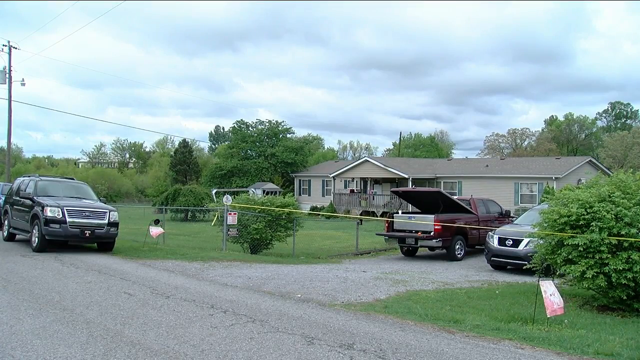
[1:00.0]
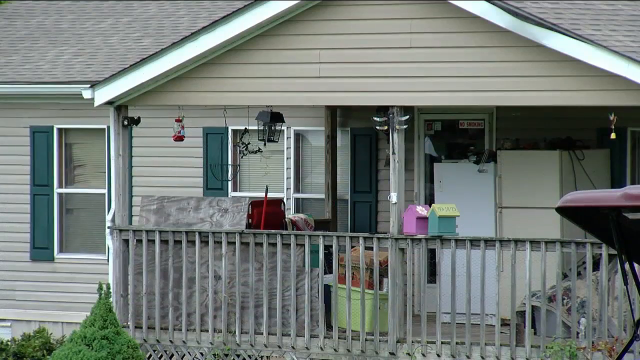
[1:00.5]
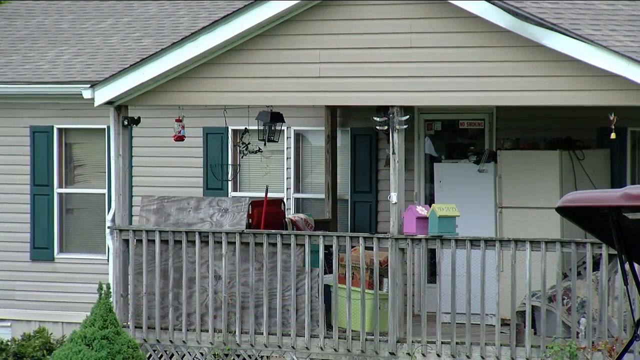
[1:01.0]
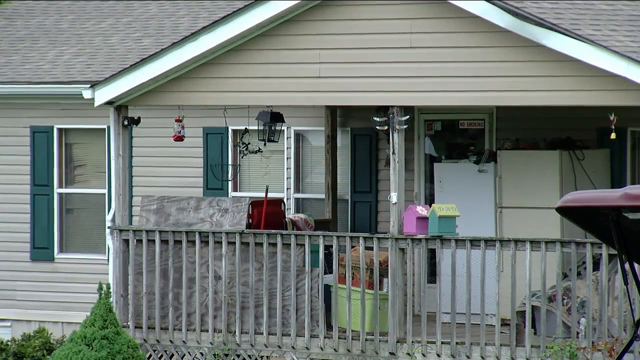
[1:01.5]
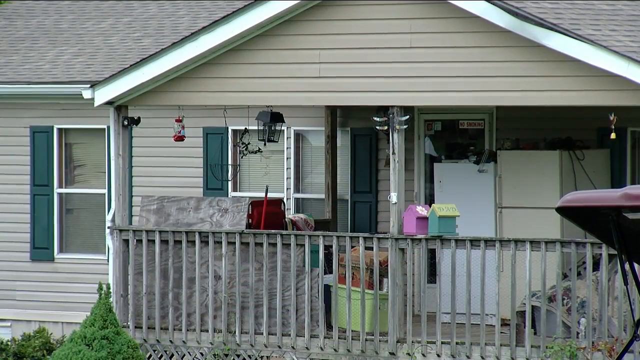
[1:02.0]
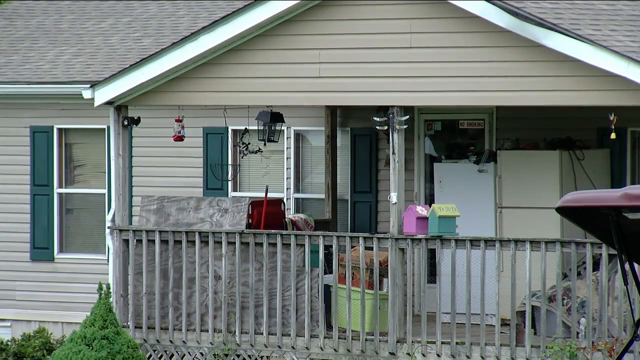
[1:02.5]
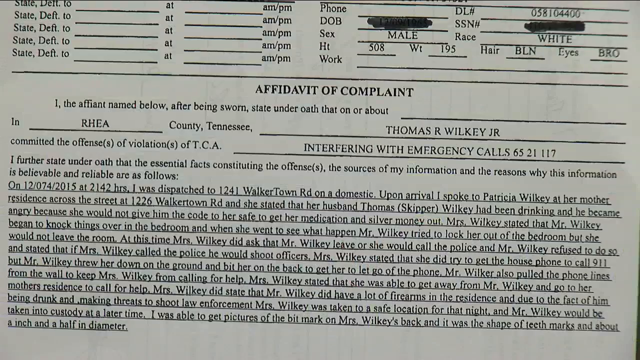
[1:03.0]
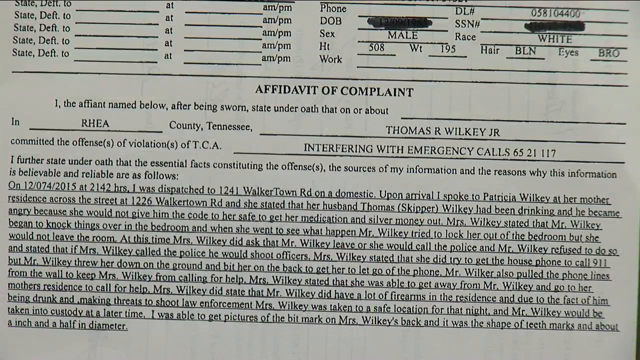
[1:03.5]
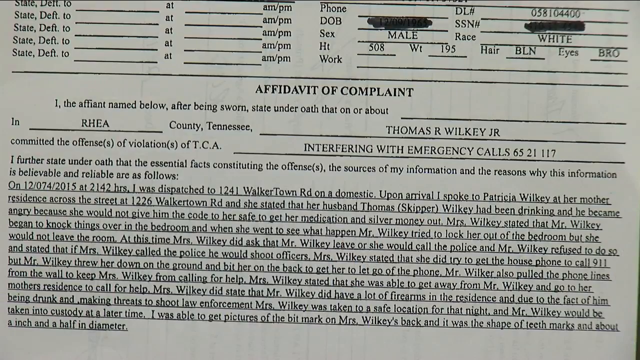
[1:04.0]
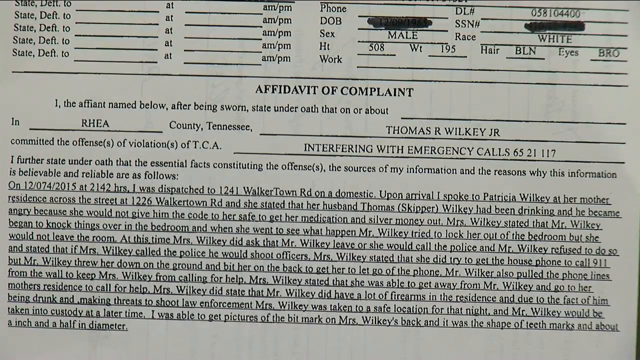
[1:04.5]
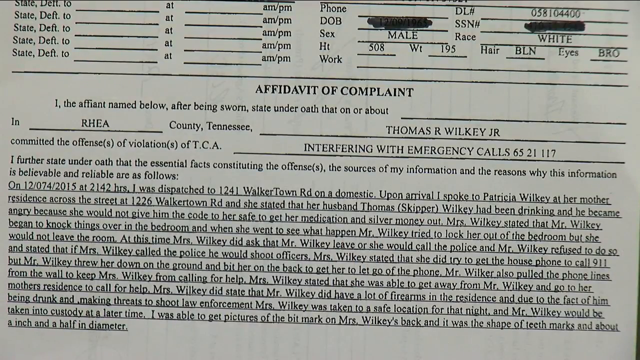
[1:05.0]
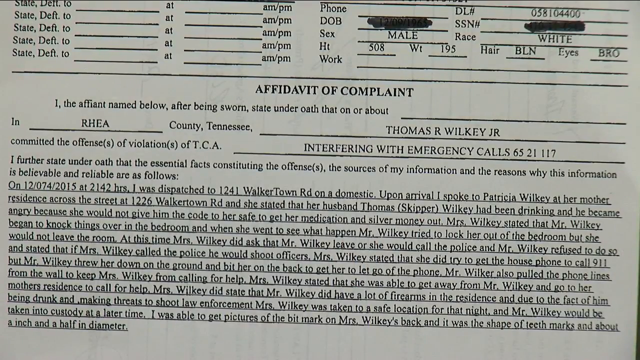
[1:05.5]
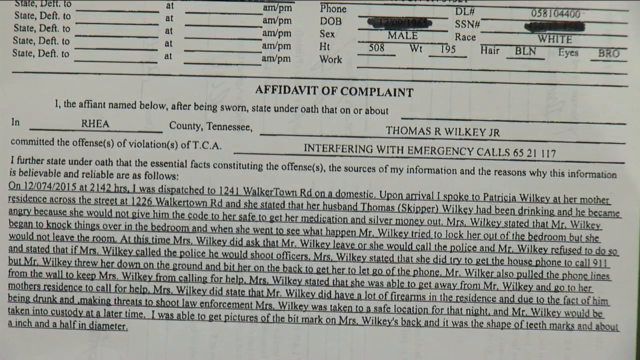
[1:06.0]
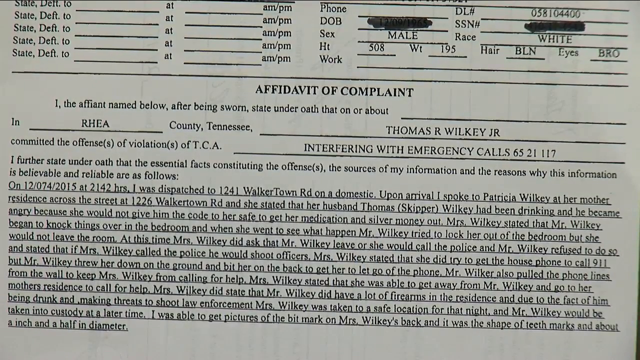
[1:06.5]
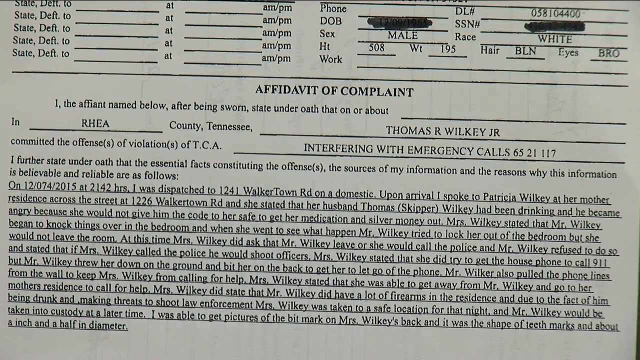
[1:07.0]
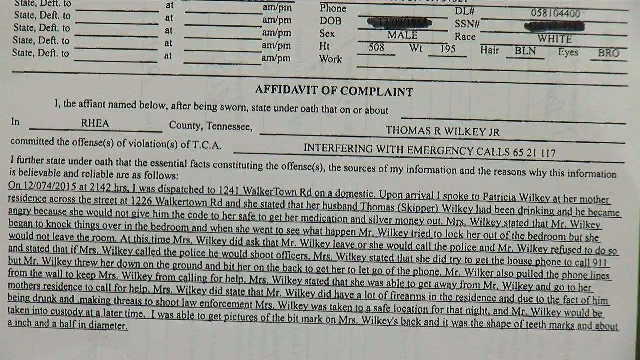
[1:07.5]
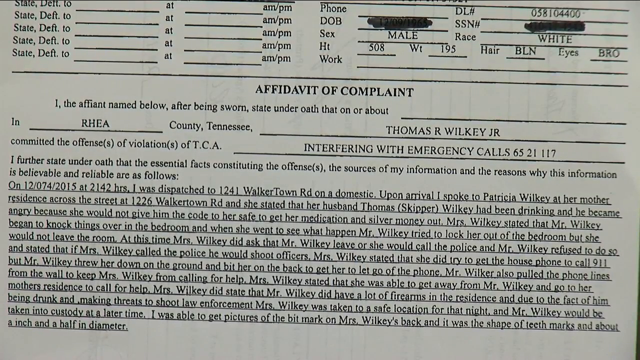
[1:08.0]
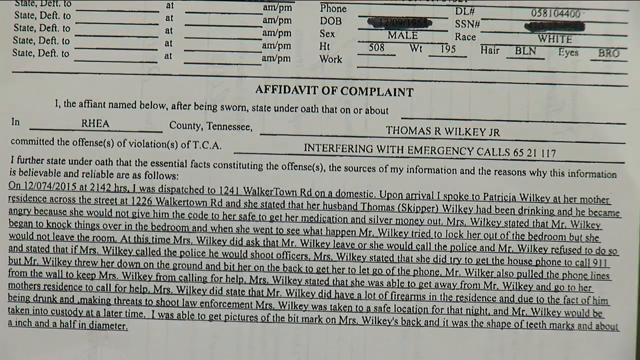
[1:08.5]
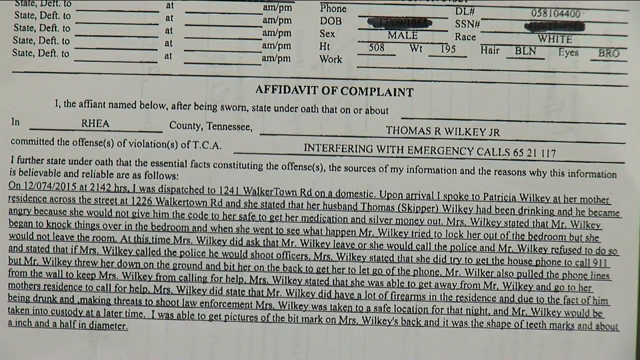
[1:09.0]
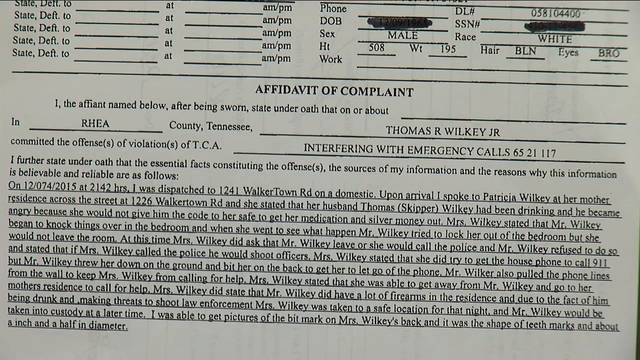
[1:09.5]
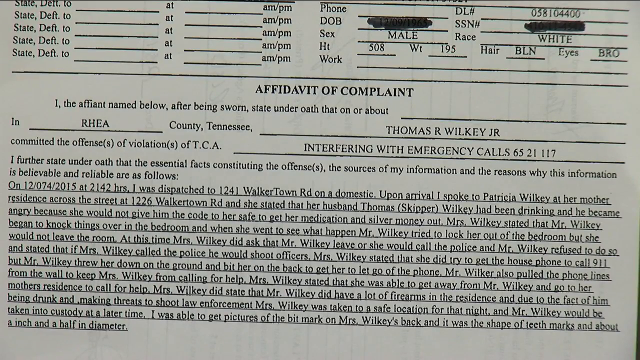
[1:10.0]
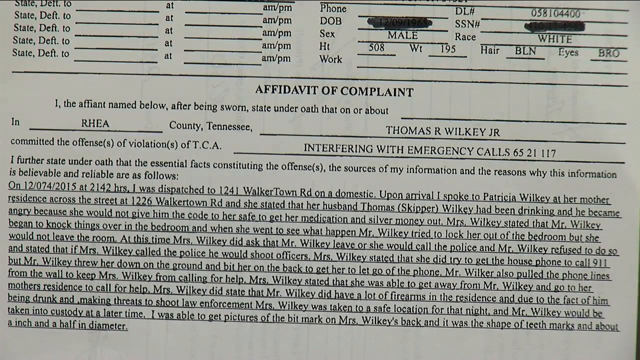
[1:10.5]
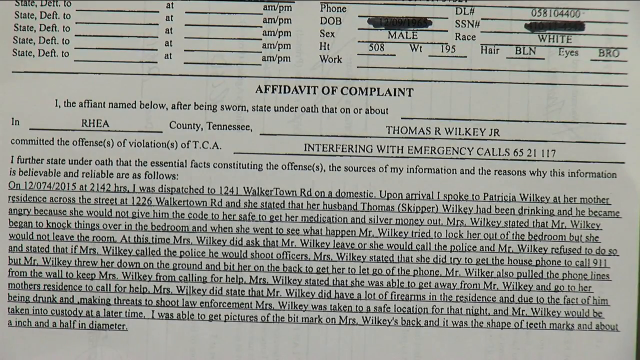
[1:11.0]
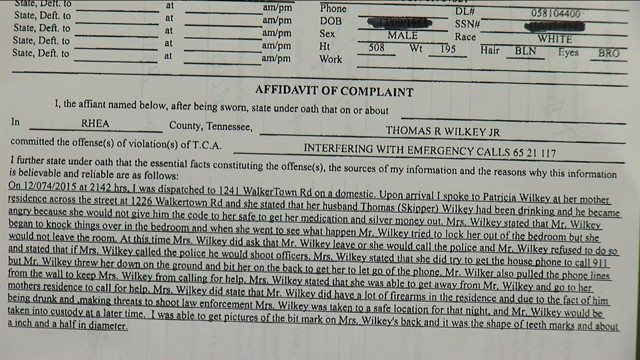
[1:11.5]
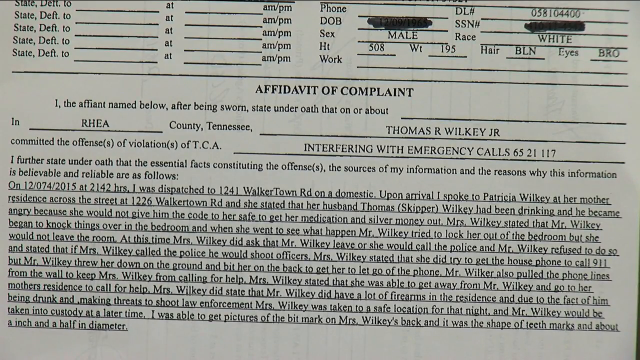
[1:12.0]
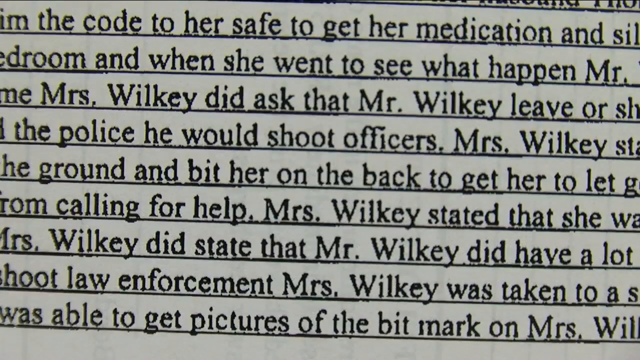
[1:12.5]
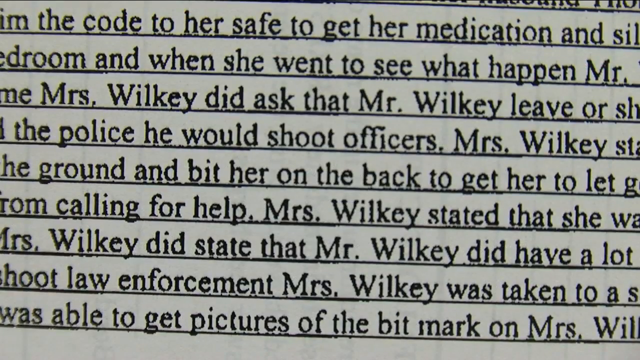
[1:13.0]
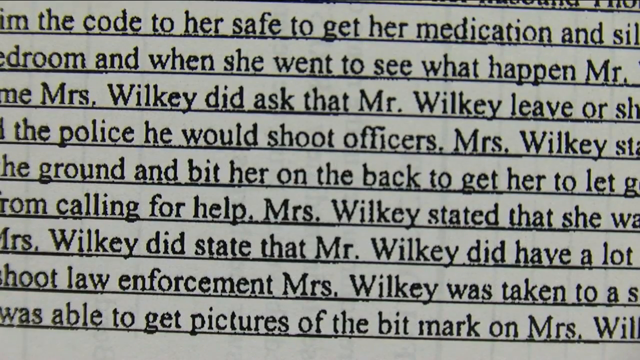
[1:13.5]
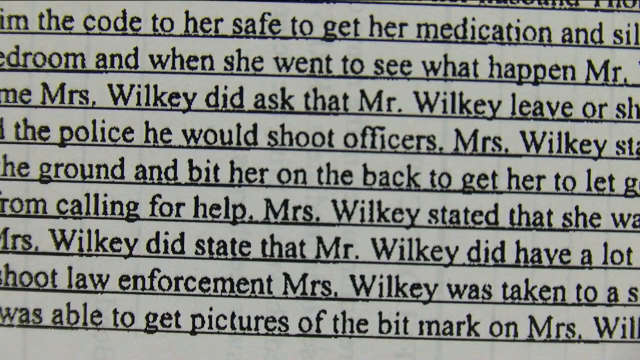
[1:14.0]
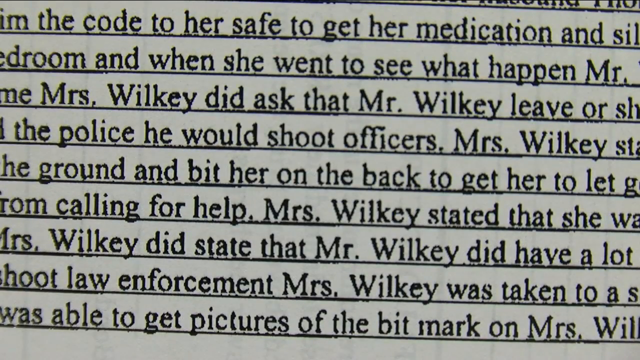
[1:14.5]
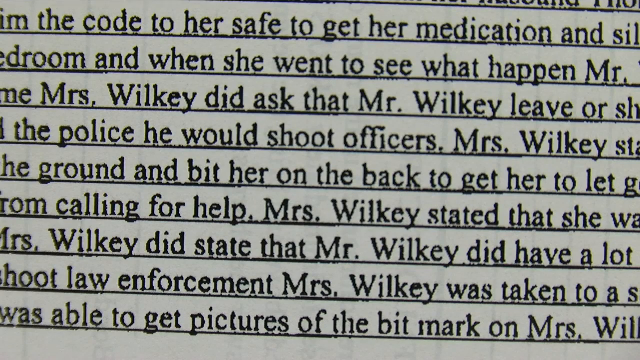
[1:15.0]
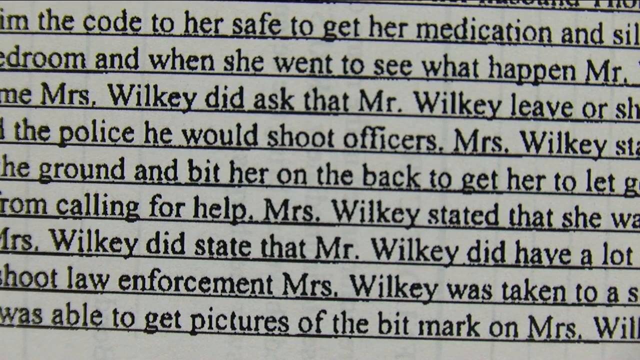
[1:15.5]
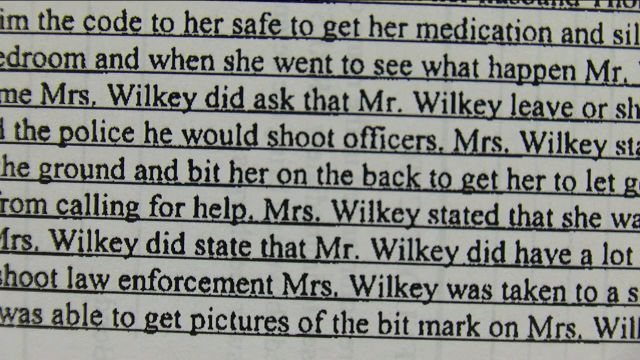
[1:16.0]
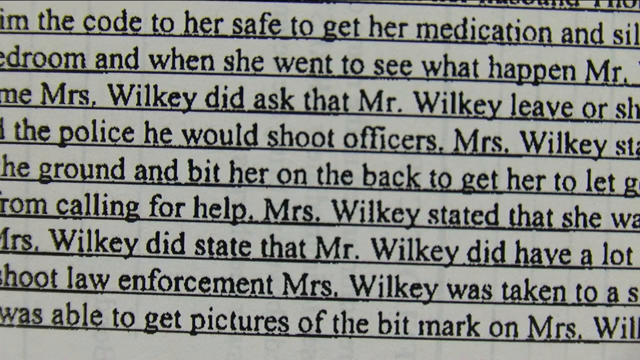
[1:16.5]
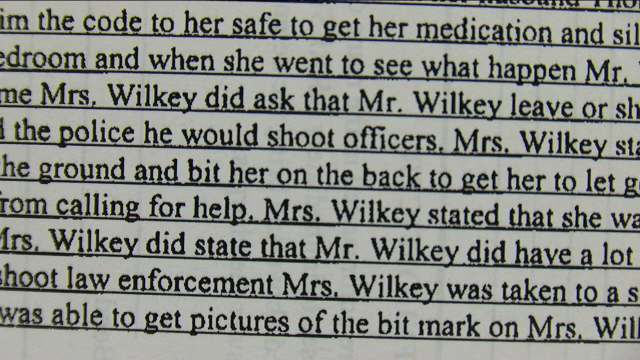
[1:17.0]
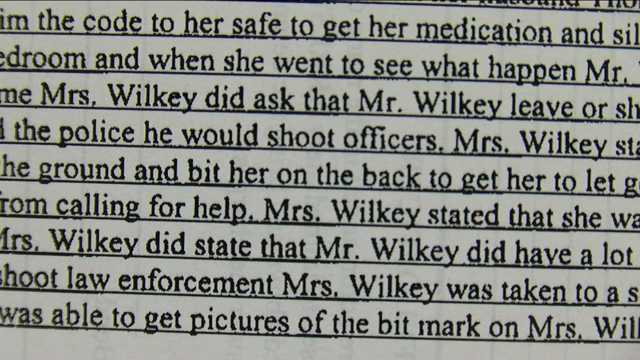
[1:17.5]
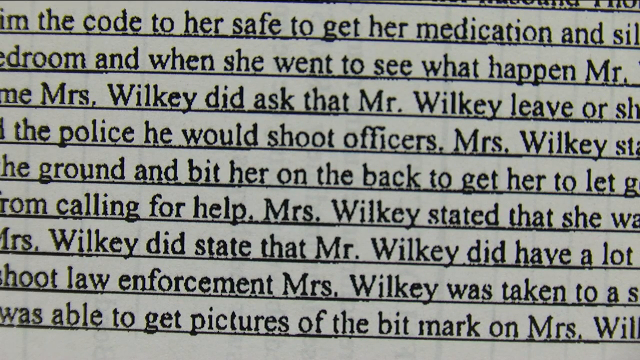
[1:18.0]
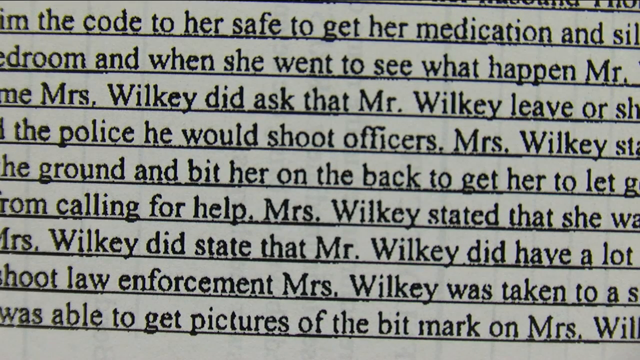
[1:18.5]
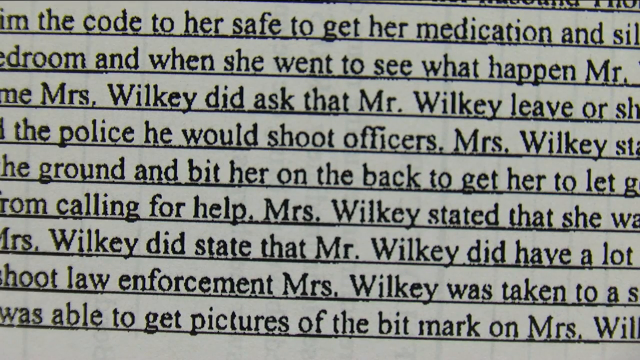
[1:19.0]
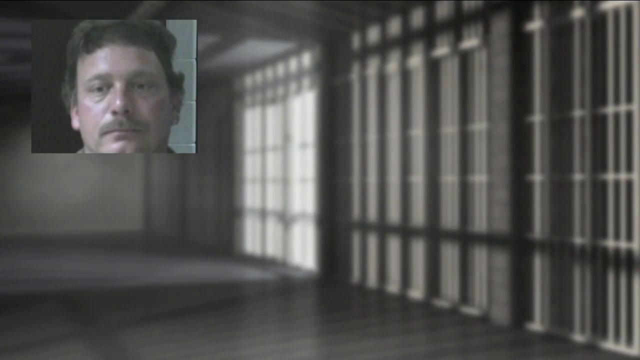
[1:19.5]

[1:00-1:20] The camera zooms into the house, showing the birdhouses and the outdoor fridges. The house is cream and looks clad with cream wood running horizontally, with green shutters on each of the windows, and there appears to be some kind of clear and red bird feeder hanging up. The scene switches to the document with the writing about the homicide, which has the name Thomas R. Wilkley Jr. on it. The document zooms in further so the words are clearer. The scene then briefly switches to a blurred-out jail cell with two faces, shown for only a brief second, so few details of the faces can be made out.